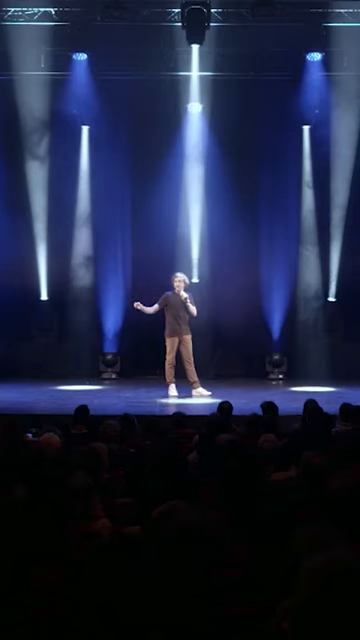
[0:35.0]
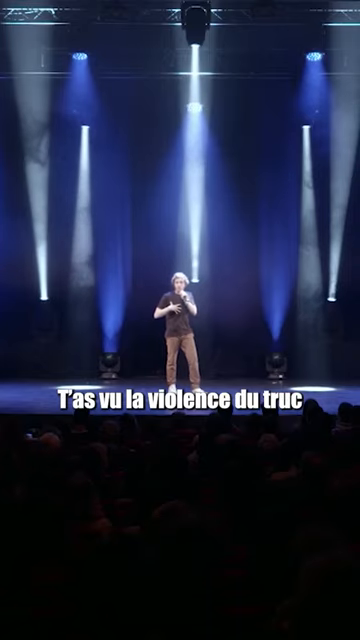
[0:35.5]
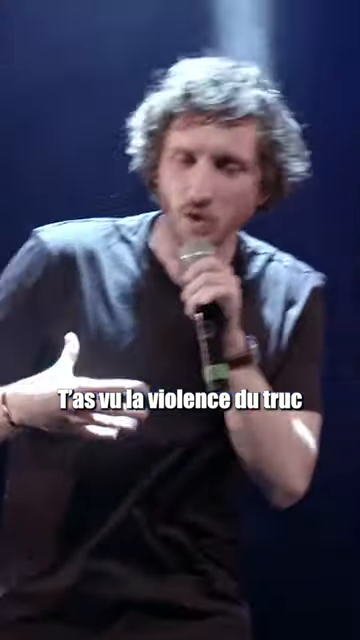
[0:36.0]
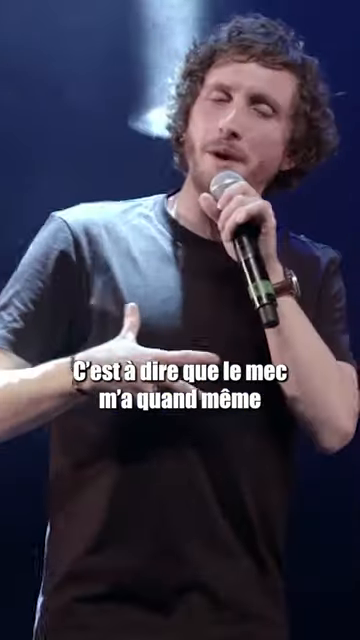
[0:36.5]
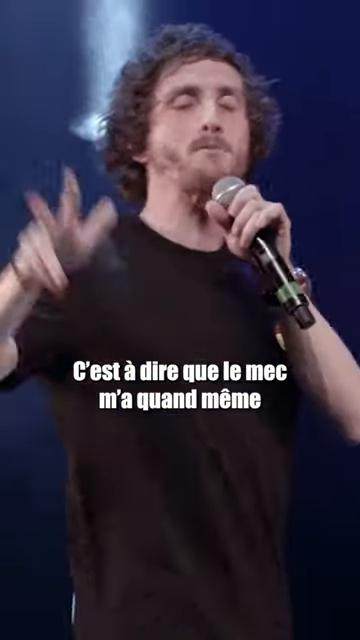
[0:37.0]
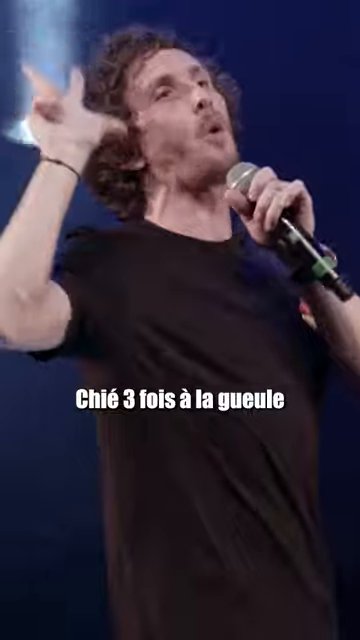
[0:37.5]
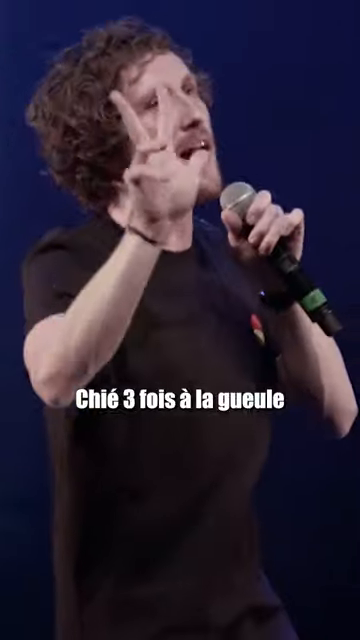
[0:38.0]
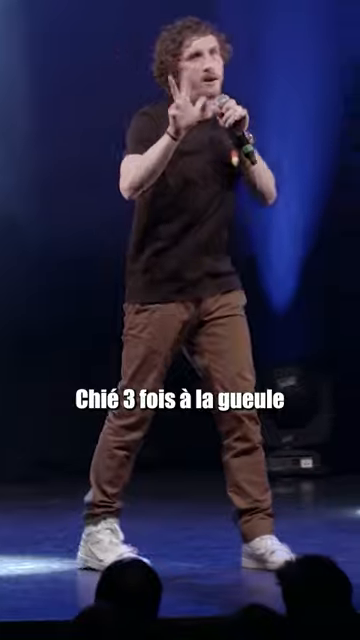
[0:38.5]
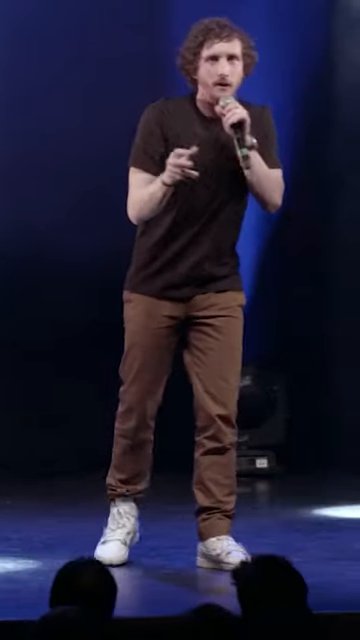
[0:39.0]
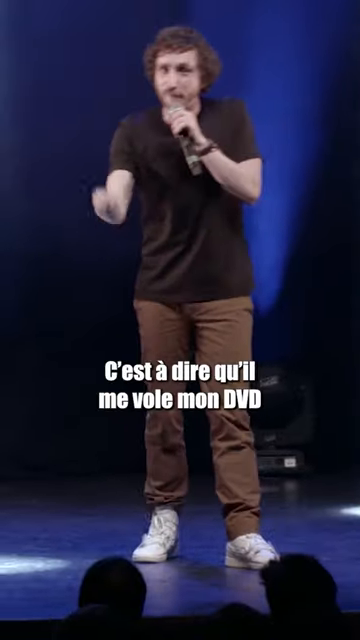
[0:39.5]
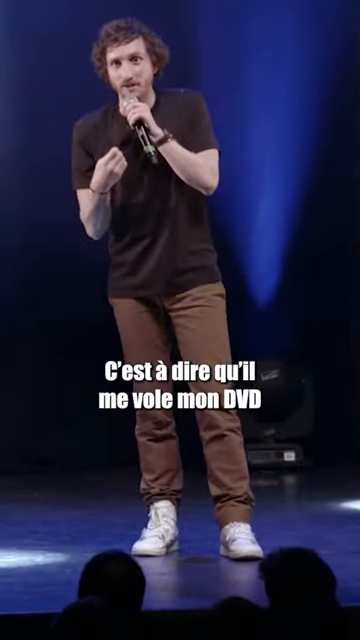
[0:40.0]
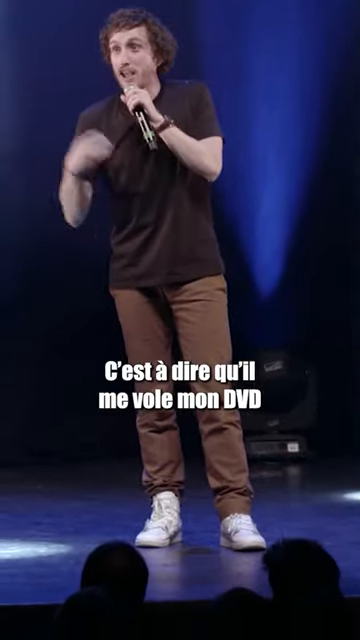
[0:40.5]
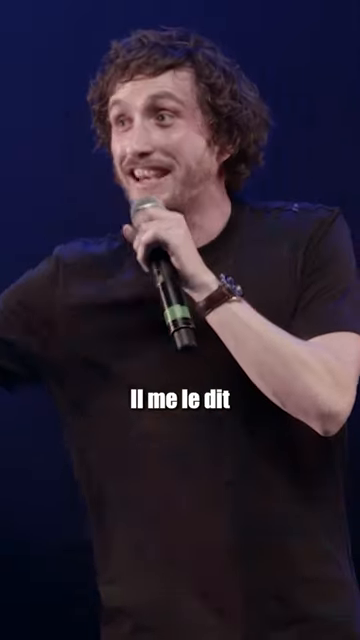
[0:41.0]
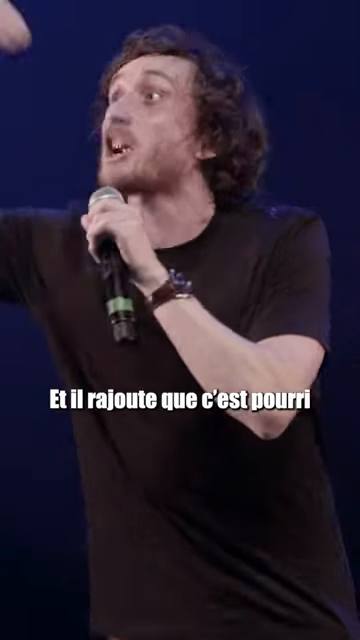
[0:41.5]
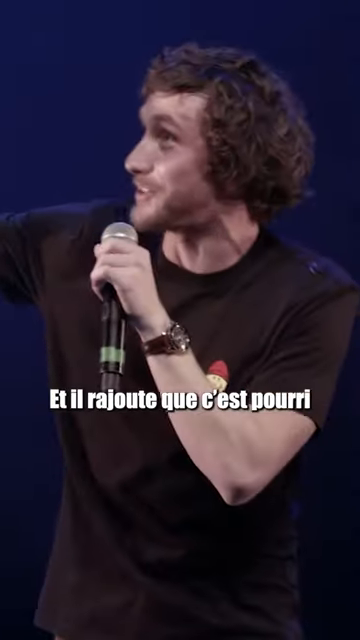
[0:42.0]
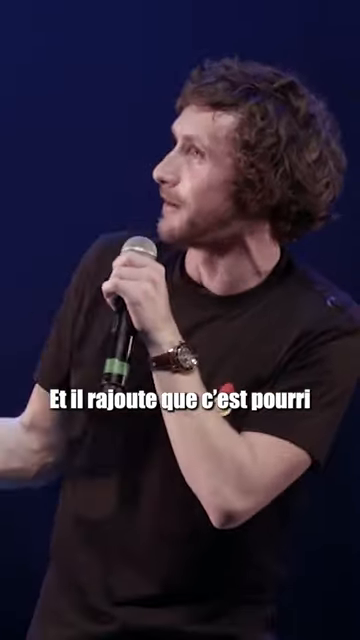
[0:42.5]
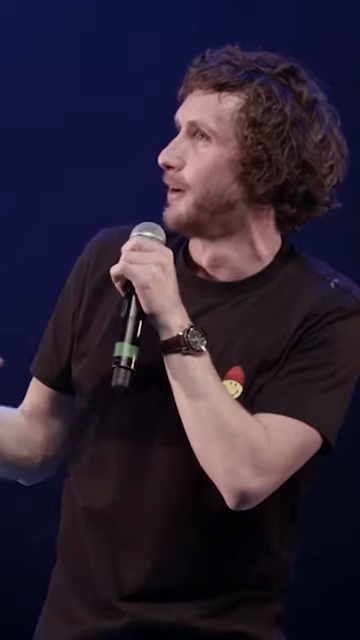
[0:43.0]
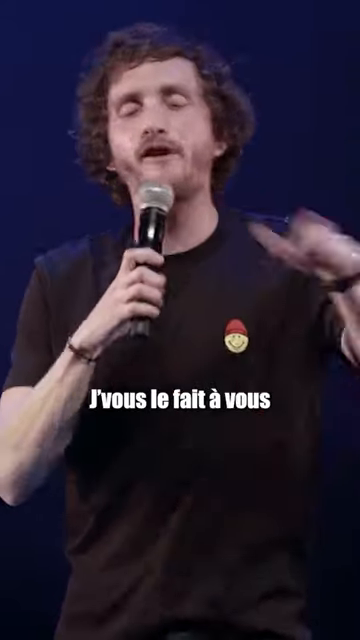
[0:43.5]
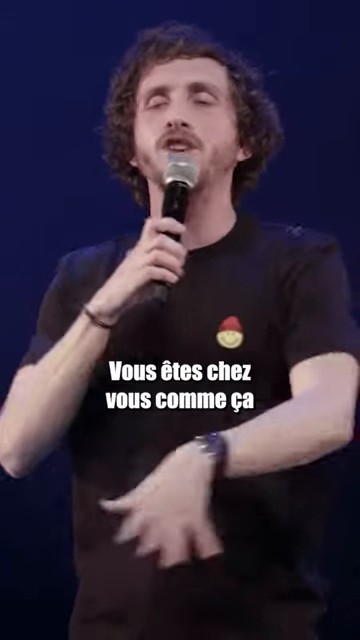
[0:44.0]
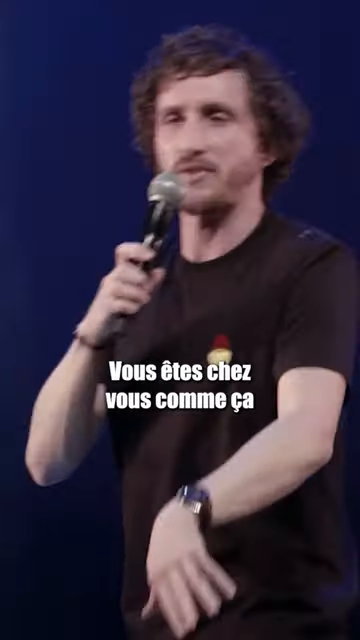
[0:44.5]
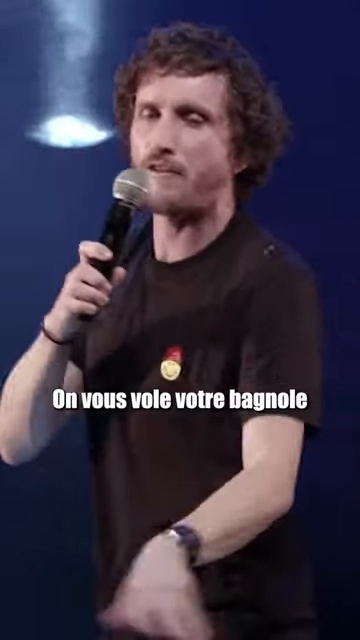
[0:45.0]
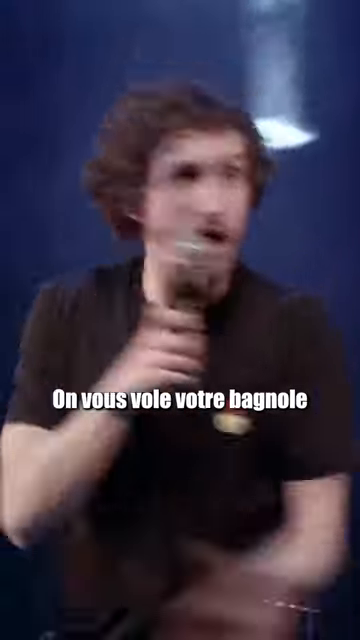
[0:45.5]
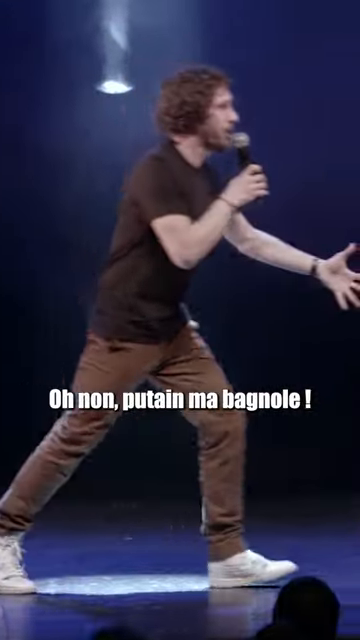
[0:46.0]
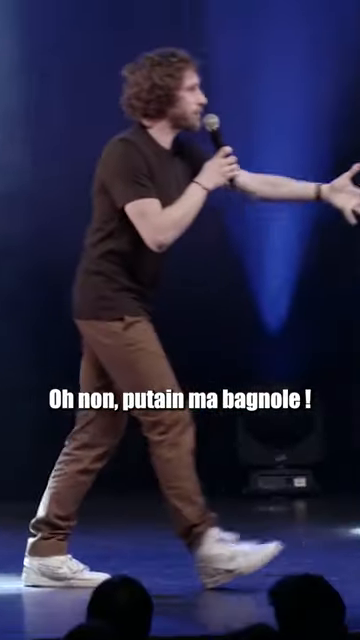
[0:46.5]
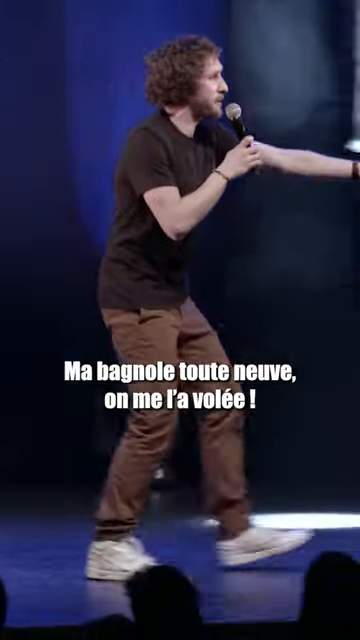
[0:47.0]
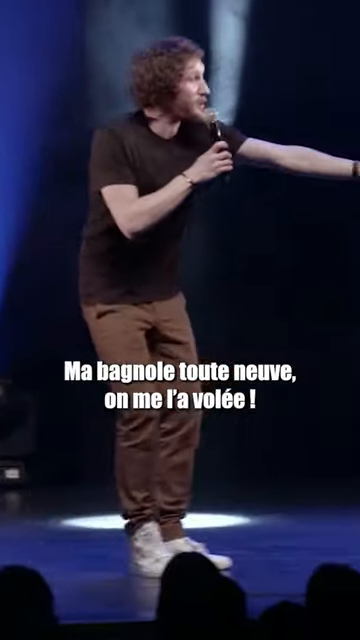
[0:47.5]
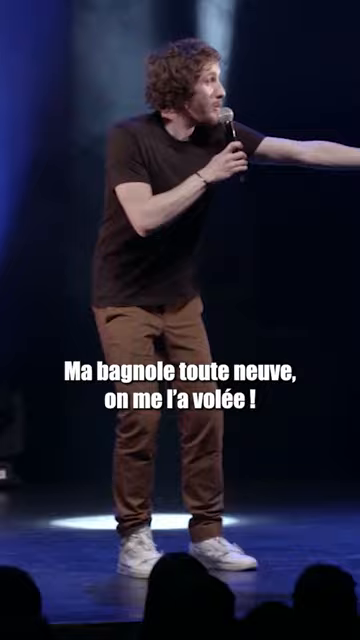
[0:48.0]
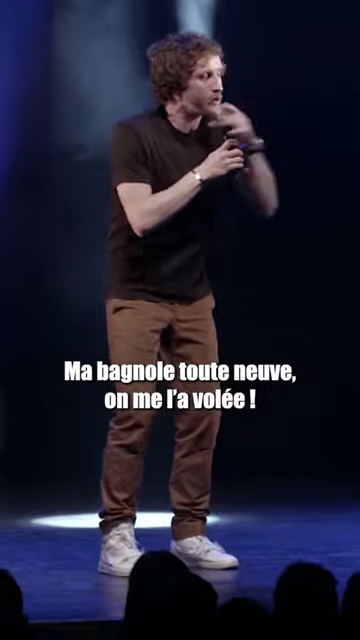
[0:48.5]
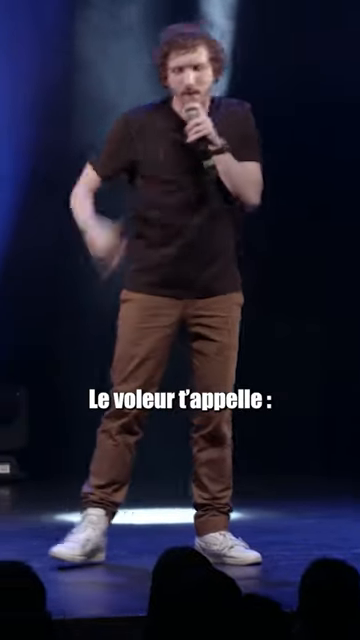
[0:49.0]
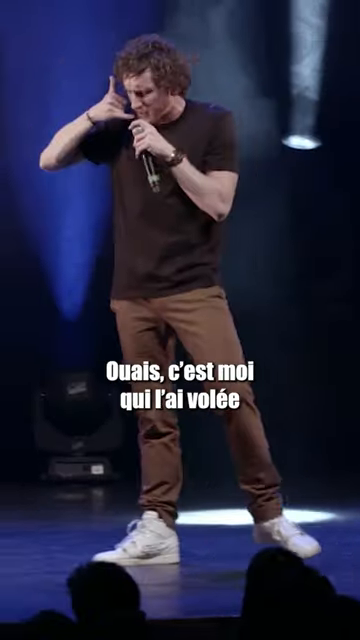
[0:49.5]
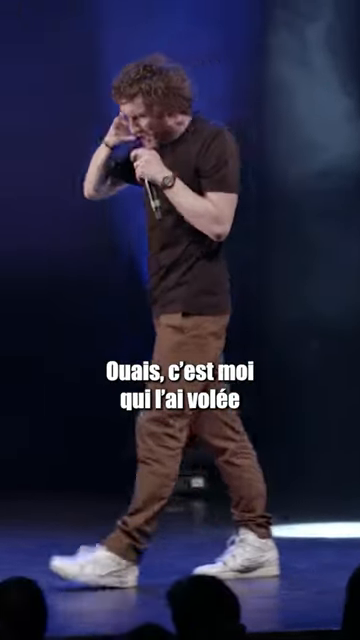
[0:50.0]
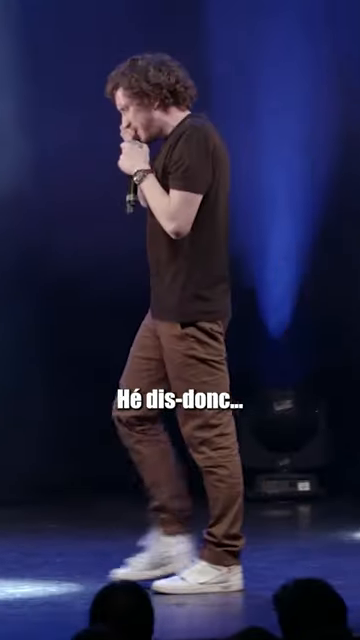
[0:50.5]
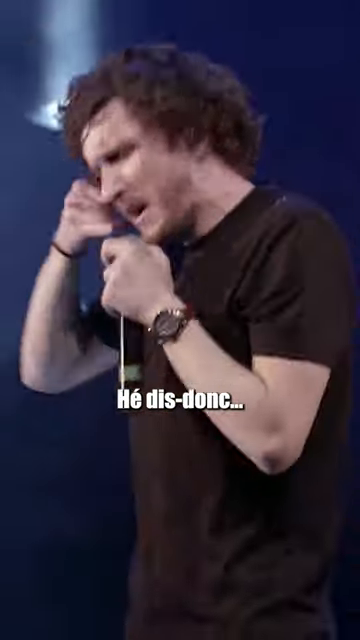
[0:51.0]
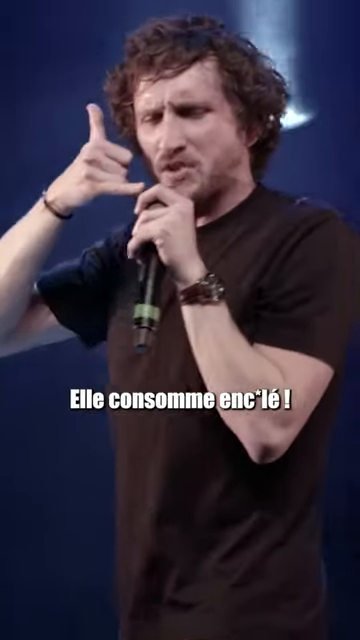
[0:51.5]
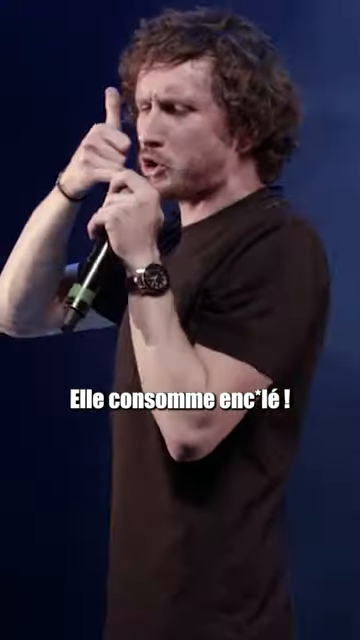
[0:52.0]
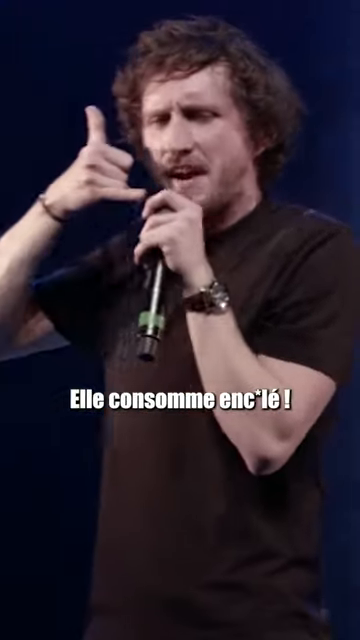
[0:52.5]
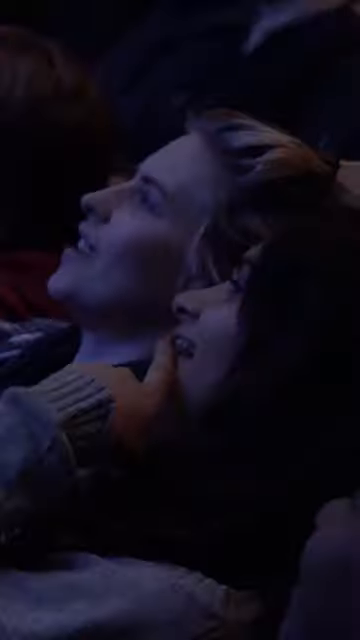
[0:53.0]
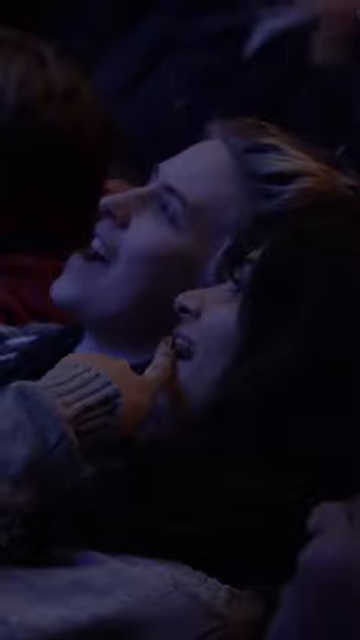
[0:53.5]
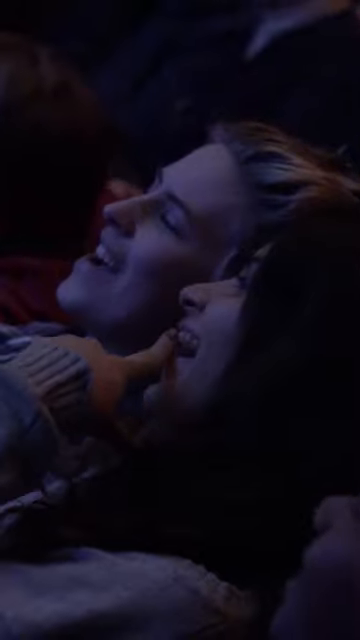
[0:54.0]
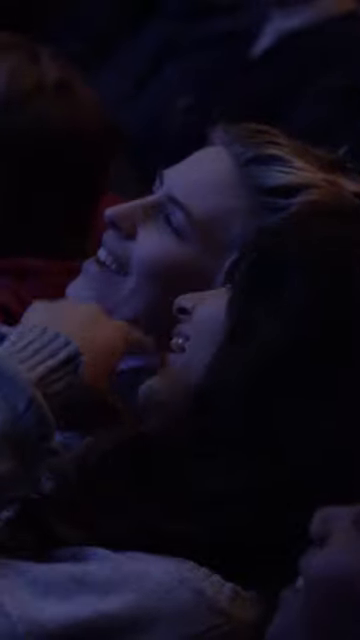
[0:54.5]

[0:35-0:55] He seems to pace around the stage as he tells jokes, more often holding the microphone with his left hand and gesturing with his right. He pretends to be on the phone. The camera pans to the audience laughing at what he says. In the full-body shot, the pants cuff on his right side is higher than on his left. The video has subtitles in French. At several moments he gestures to the audience and pauses for laughter, and the audience laughs with him and at his jokes, so he seems to have a good rapport with them. He looks like he is maybe in his mid to late 20s; he is white, maybe of average height, and slim.